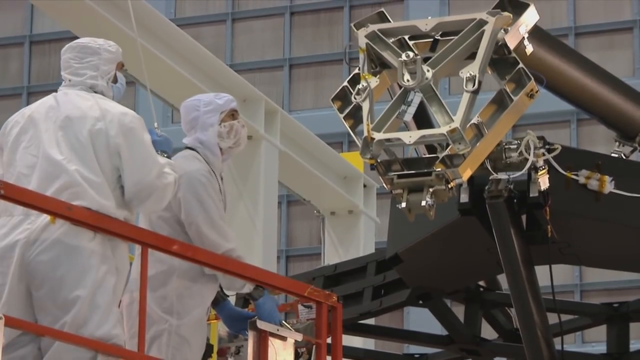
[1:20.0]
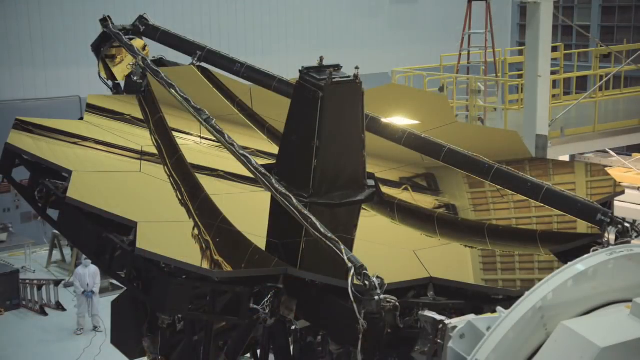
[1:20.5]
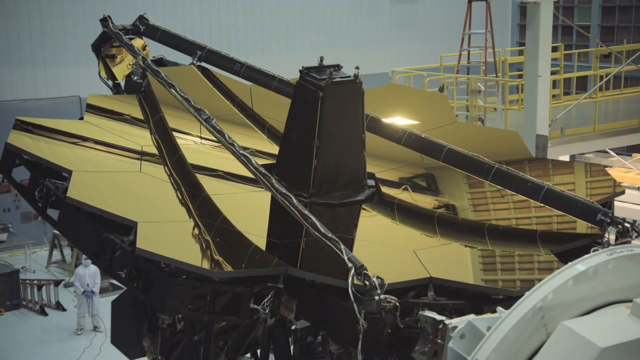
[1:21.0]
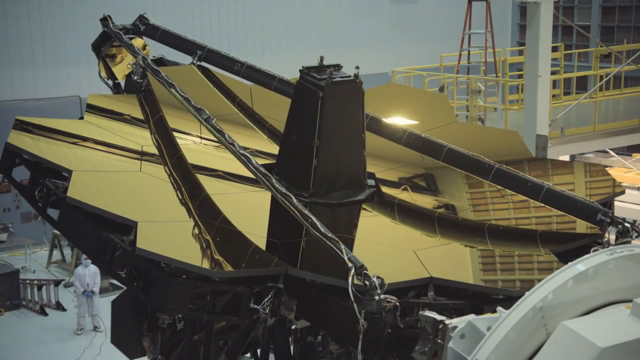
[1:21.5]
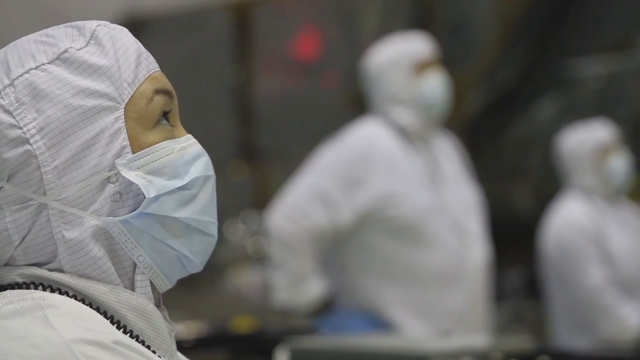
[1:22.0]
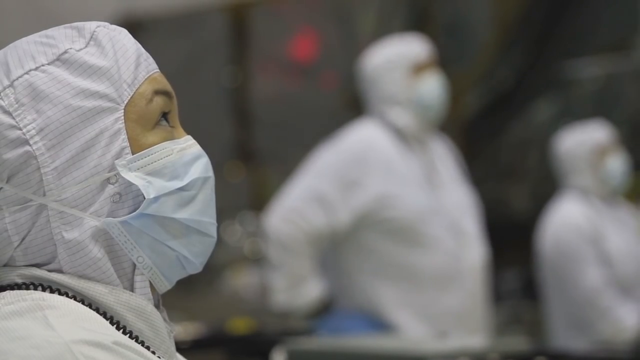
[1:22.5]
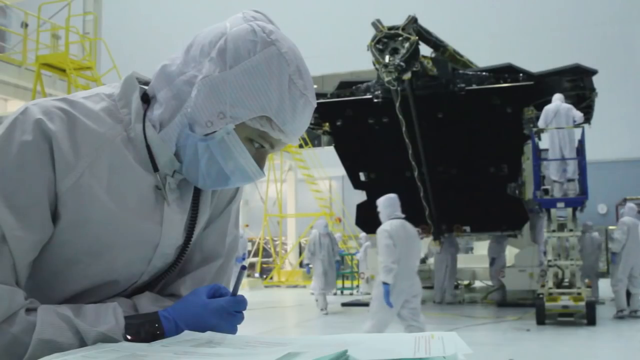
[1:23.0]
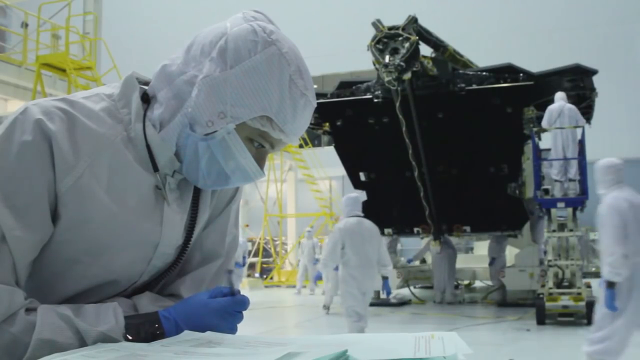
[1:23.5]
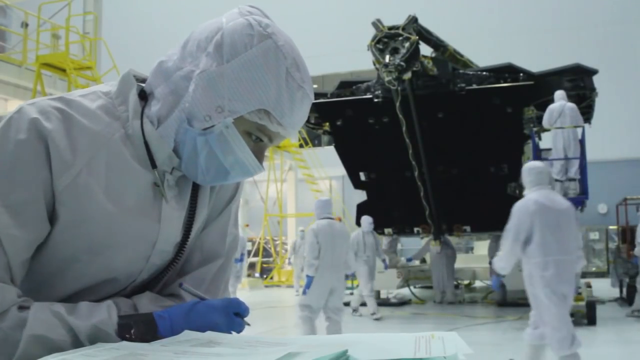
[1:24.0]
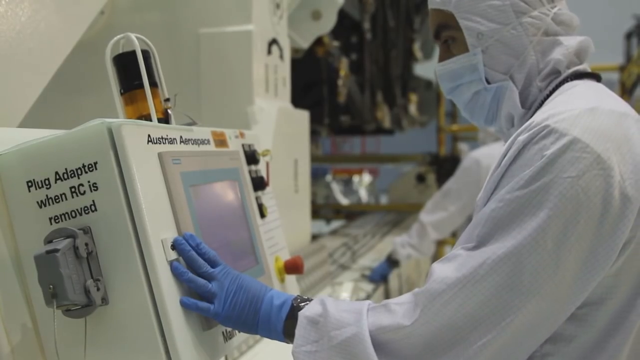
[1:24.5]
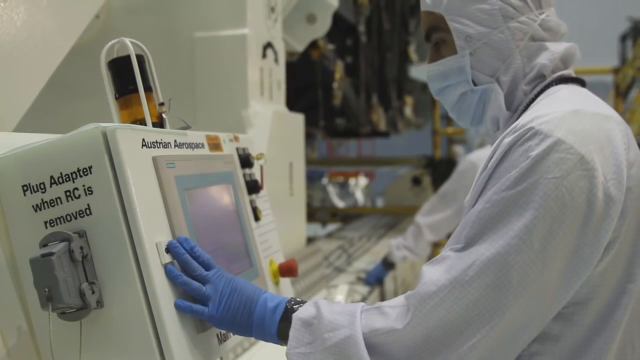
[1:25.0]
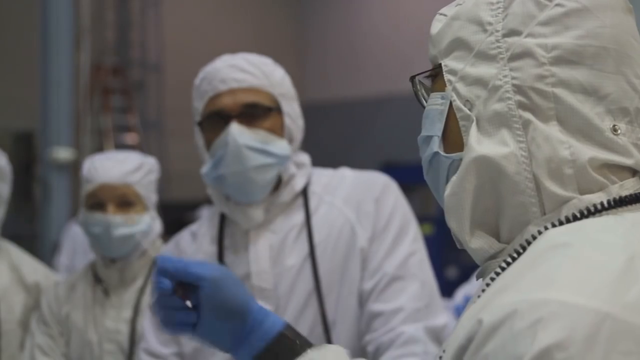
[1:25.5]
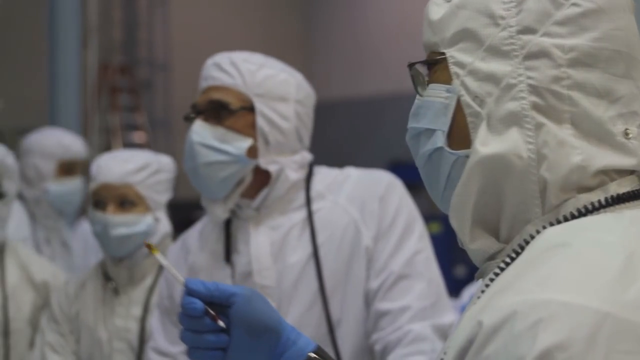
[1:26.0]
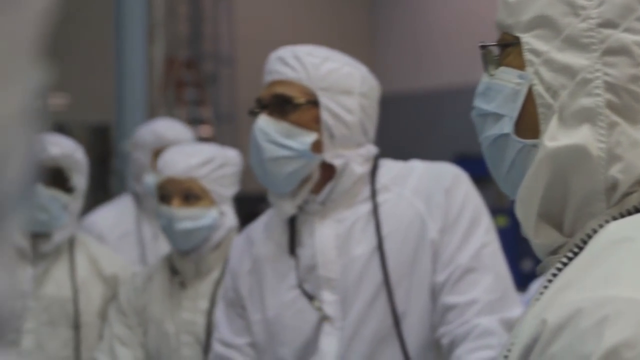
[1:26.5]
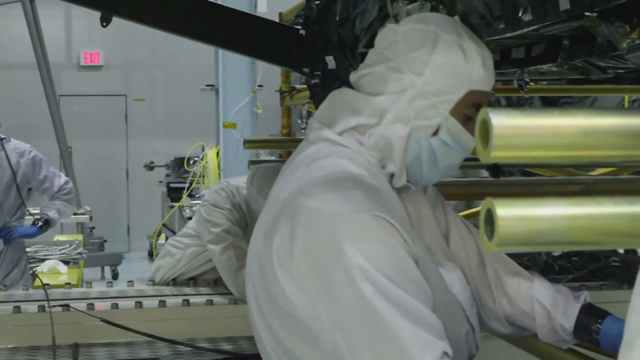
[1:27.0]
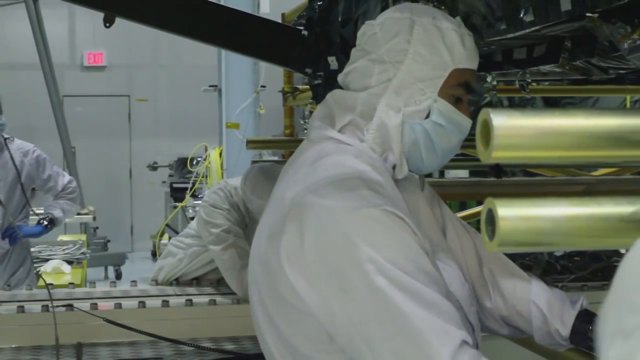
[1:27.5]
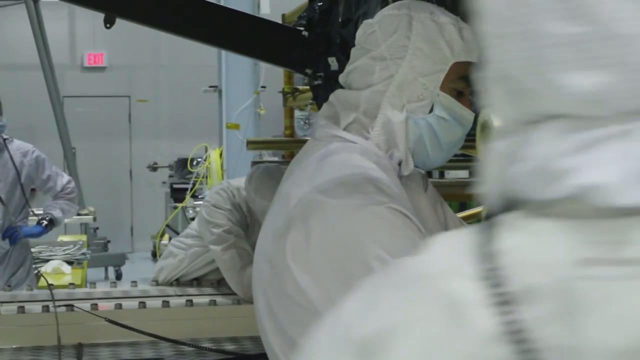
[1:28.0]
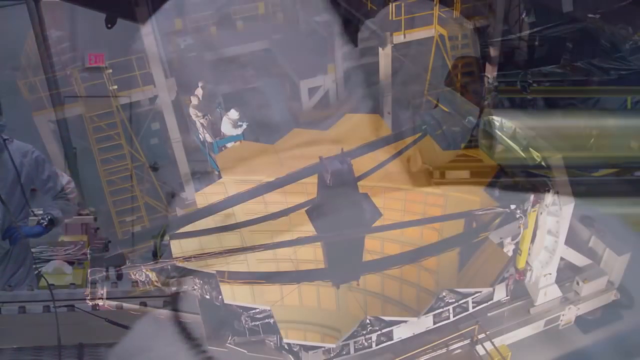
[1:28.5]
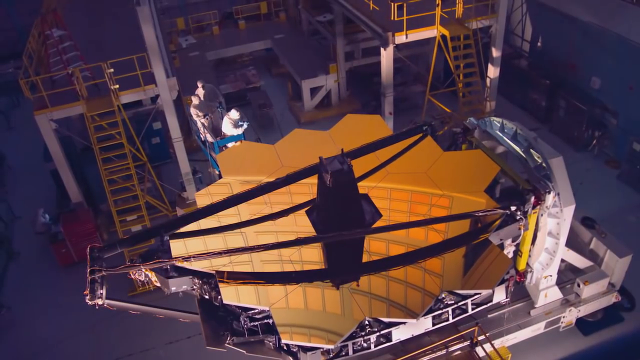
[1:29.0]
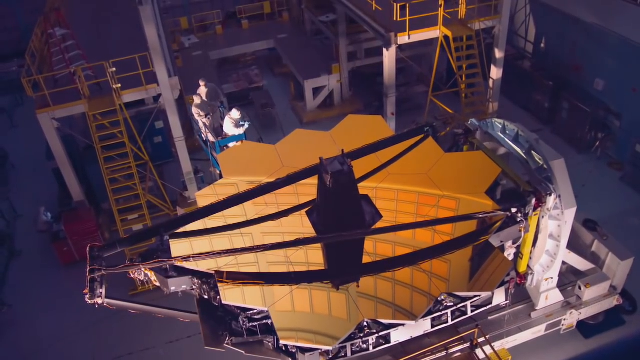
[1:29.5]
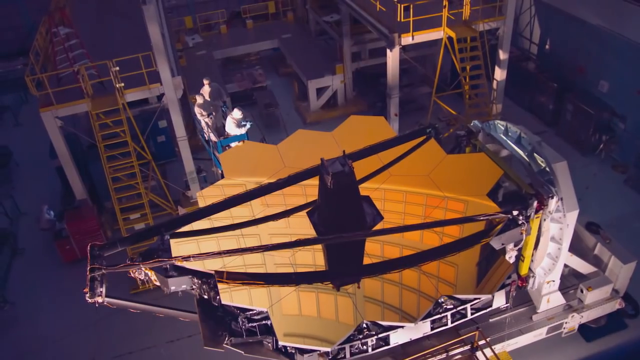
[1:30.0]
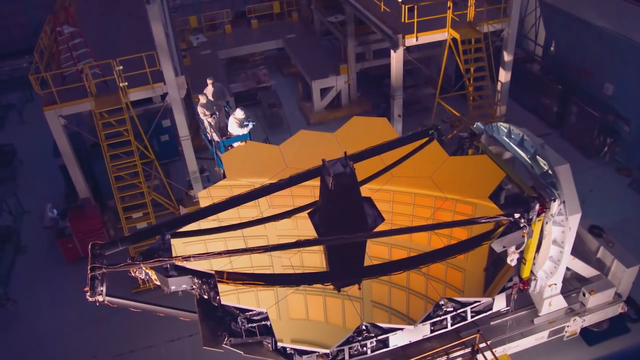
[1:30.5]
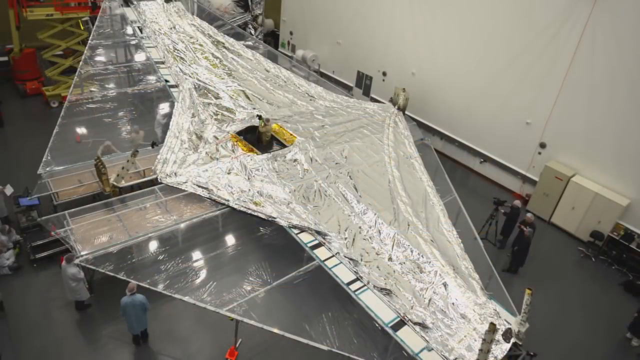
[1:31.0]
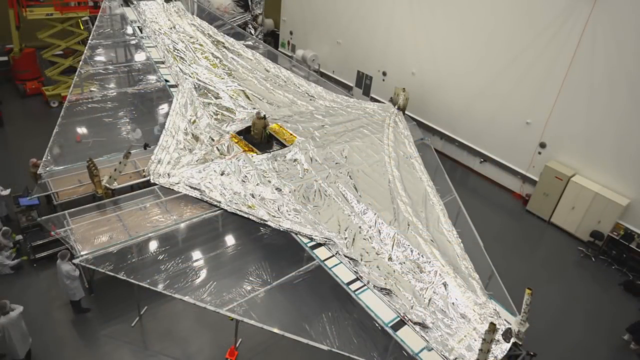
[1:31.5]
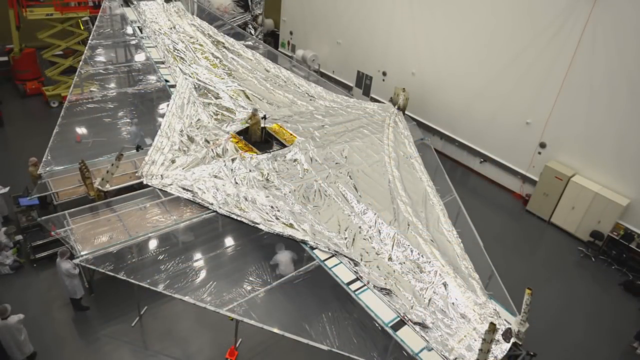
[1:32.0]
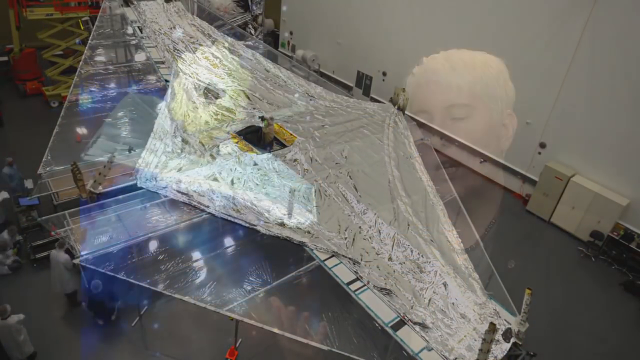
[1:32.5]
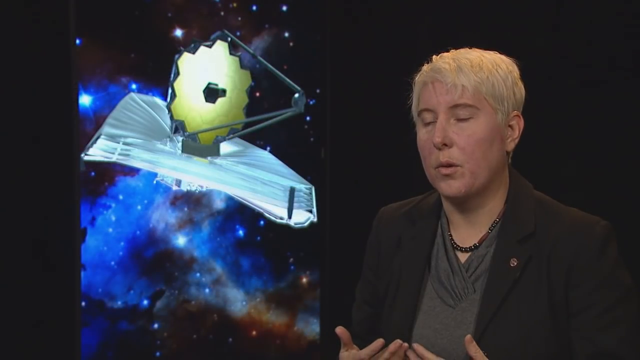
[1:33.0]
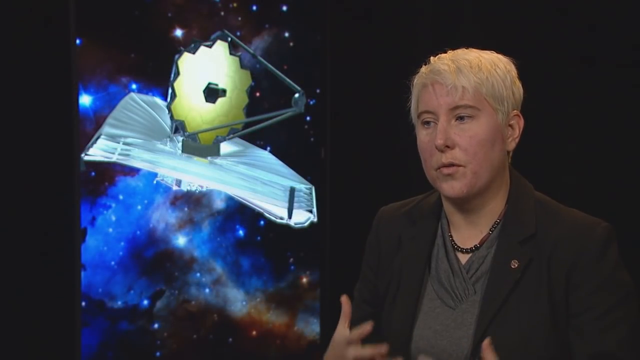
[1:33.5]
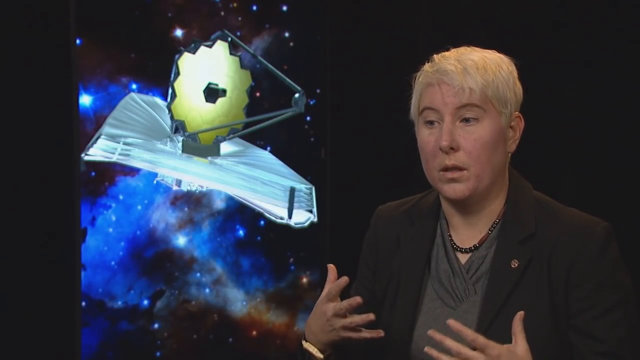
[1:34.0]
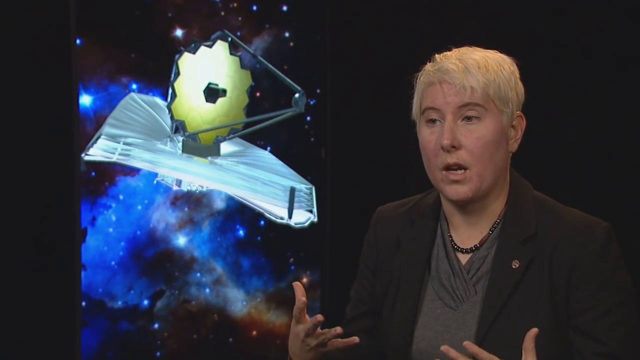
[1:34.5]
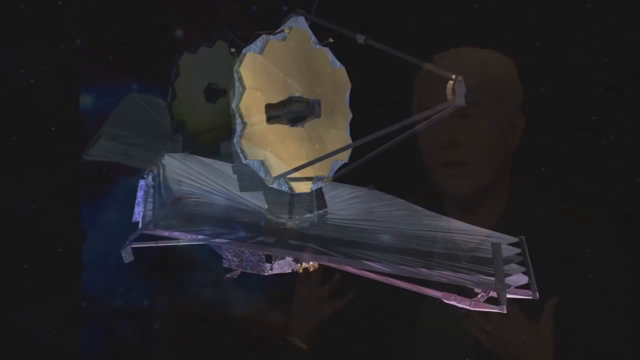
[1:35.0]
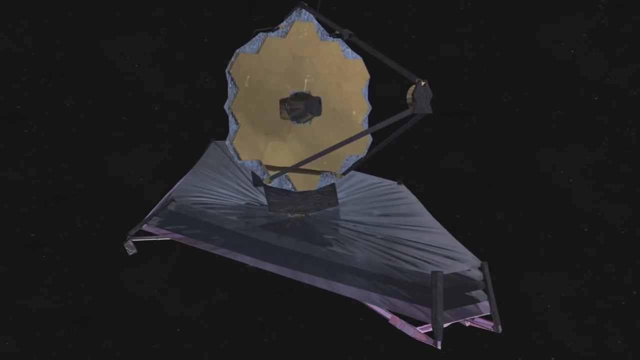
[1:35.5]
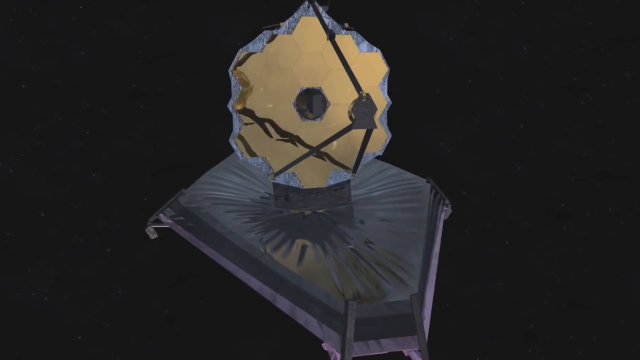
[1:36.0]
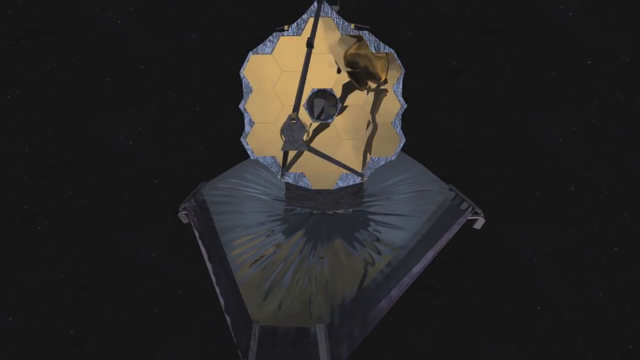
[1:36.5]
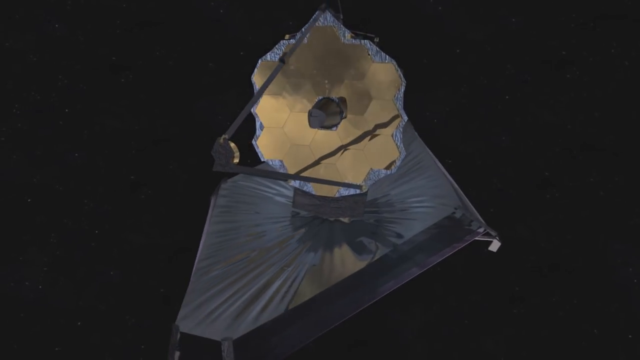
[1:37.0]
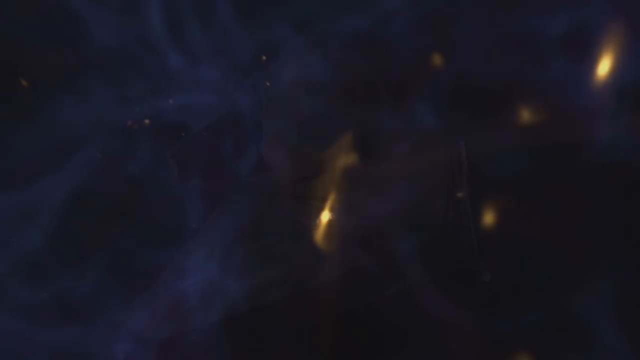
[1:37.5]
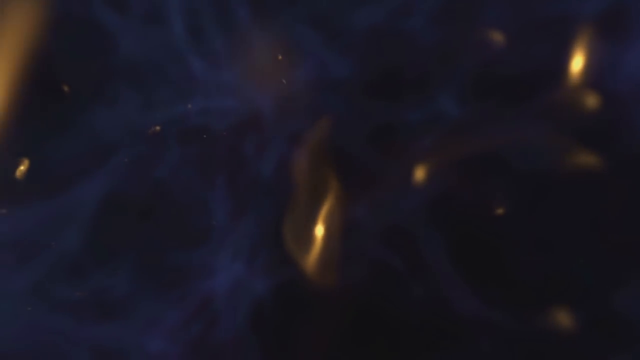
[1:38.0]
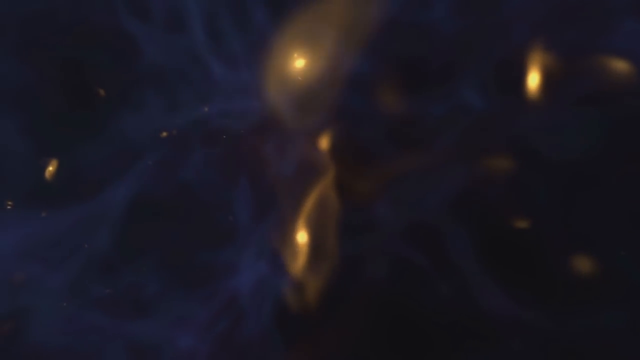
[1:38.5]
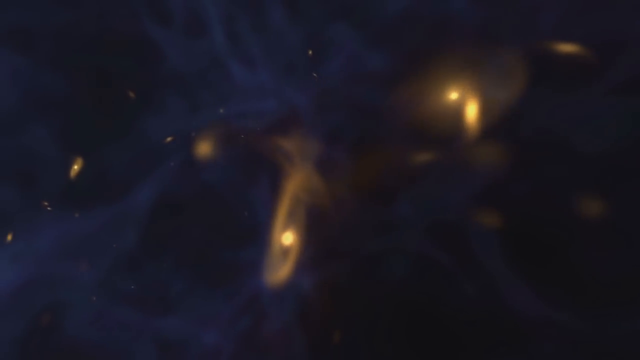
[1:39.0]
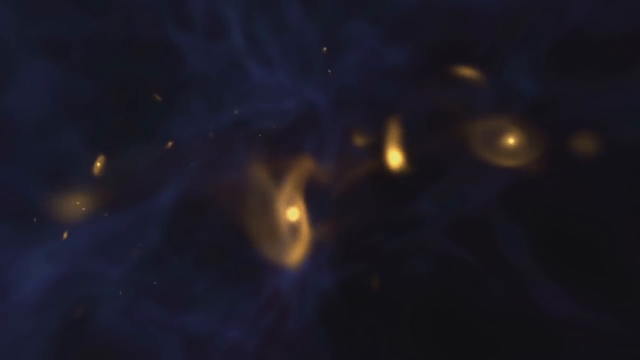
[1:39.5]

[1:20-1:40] An up-close image shows the telescope. Several people in full-body white protective gear, face masks, and blue gloves appear; one person is riding while others stand near the telescope structure, and some work at different spots on the telescope, adjusting things on it. A sped-up view shows the telescope being built. Jane Rigby, in her brown jacket and gray shirt, then speaks about the telescope. A sort of computerized image shows what the telescope will look like, turning around to give views of it from all different angles.